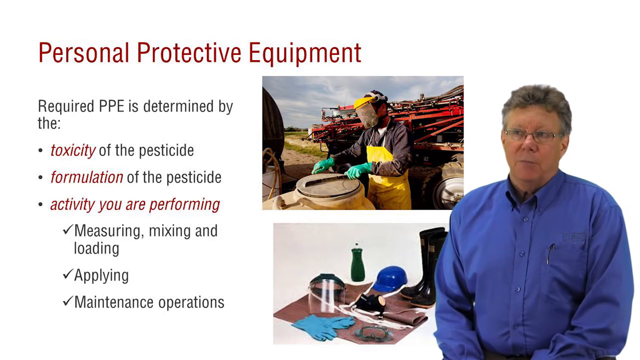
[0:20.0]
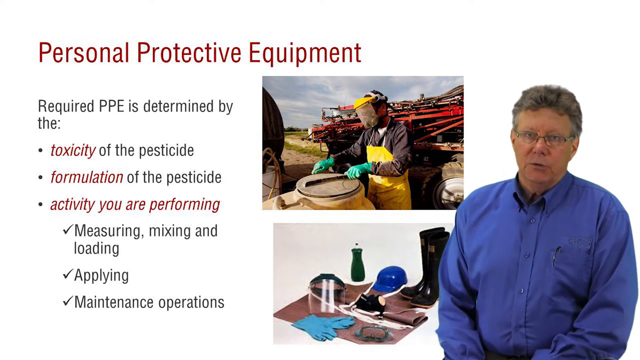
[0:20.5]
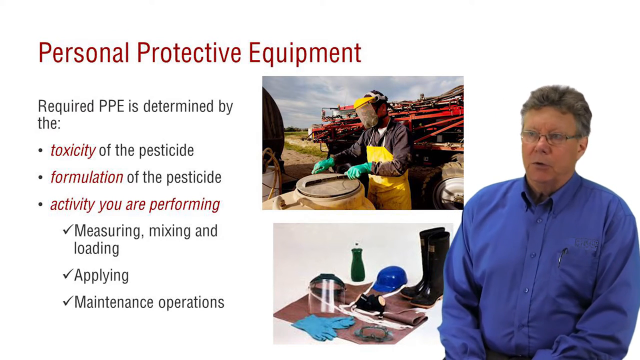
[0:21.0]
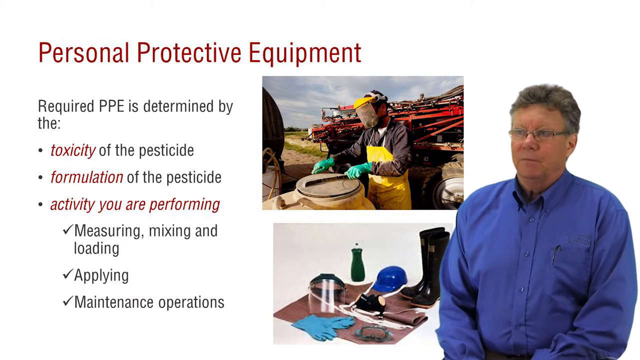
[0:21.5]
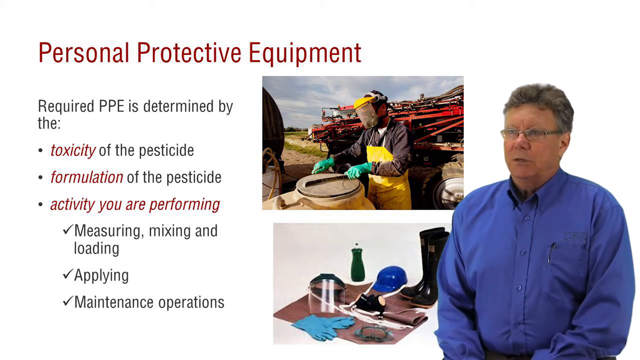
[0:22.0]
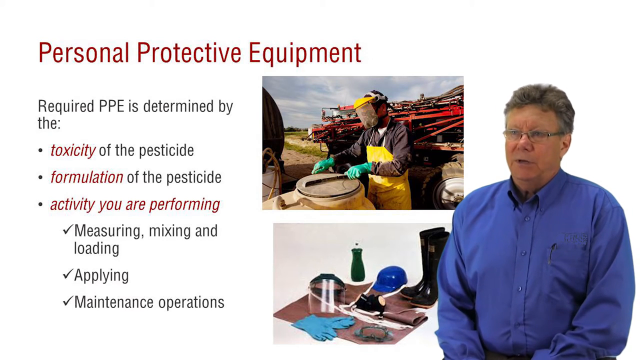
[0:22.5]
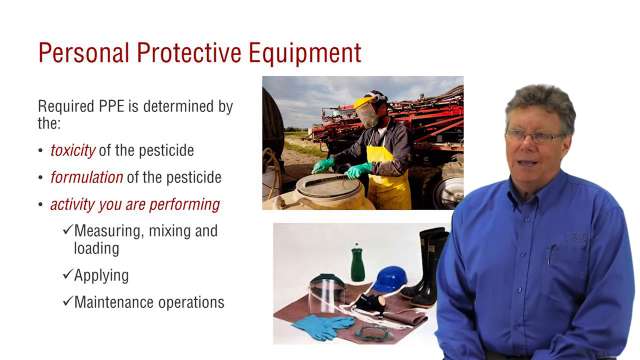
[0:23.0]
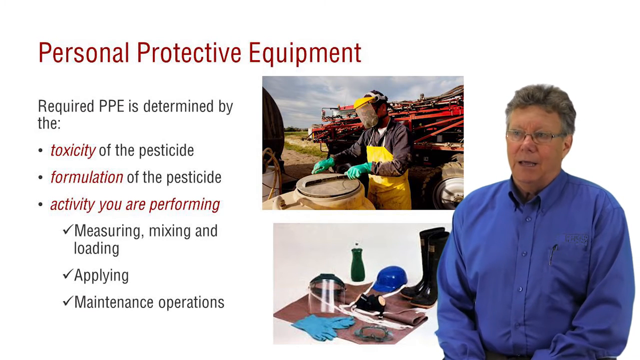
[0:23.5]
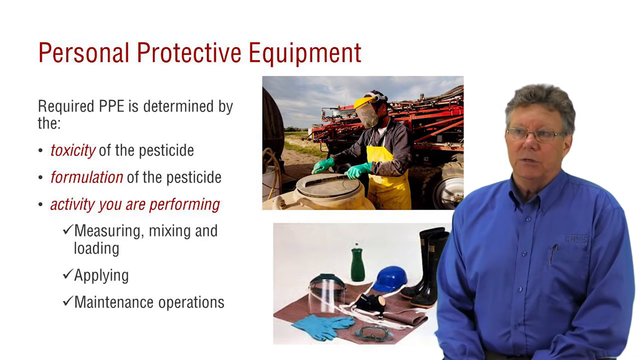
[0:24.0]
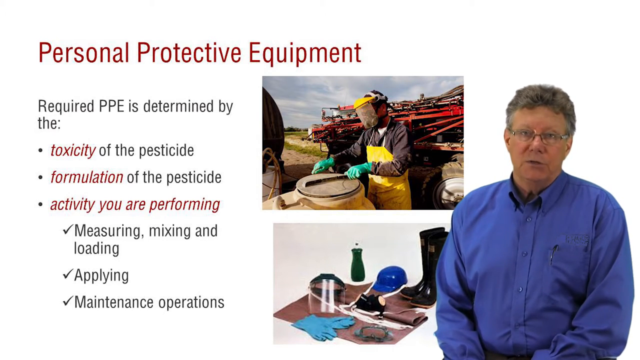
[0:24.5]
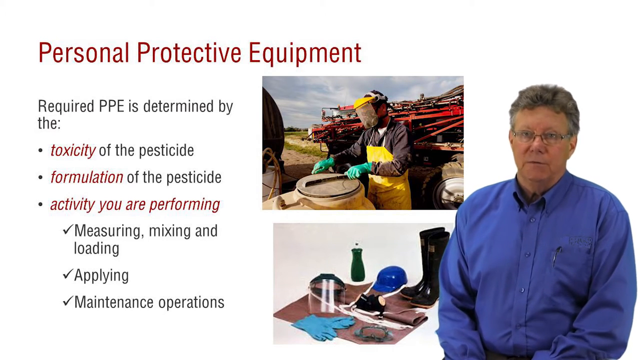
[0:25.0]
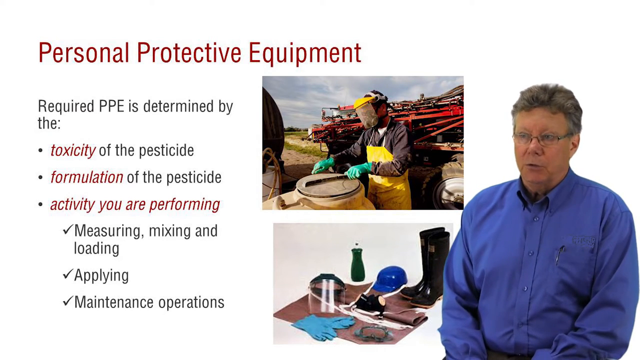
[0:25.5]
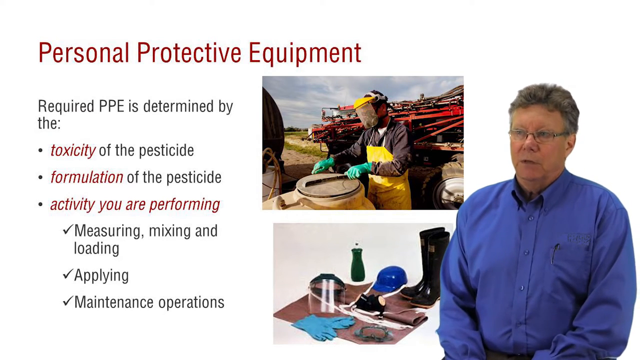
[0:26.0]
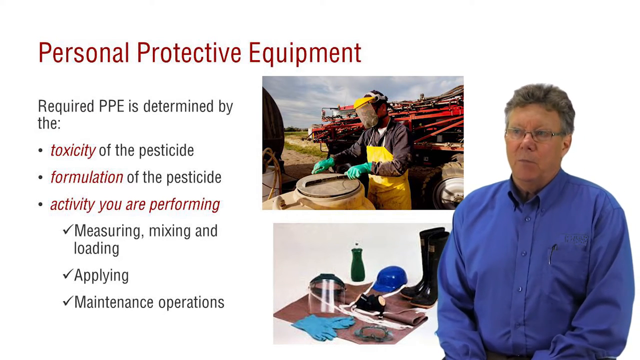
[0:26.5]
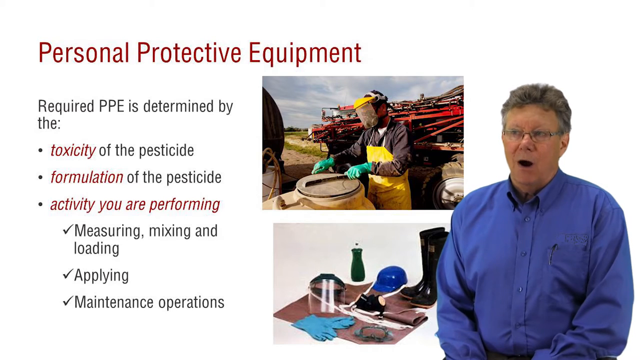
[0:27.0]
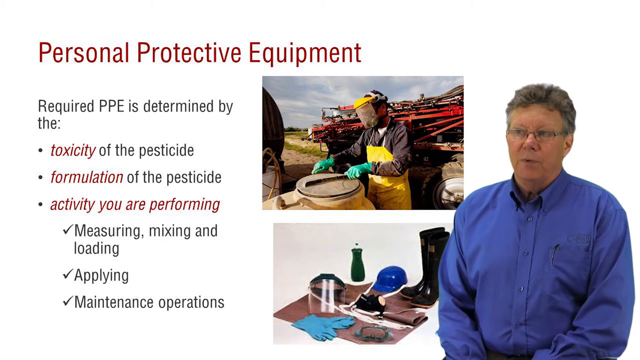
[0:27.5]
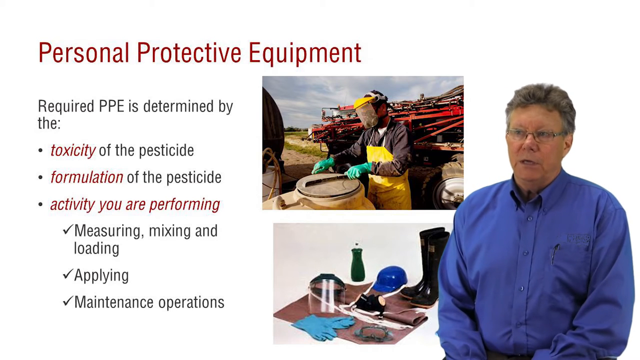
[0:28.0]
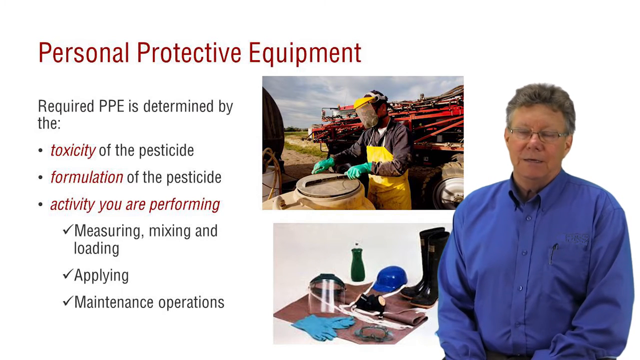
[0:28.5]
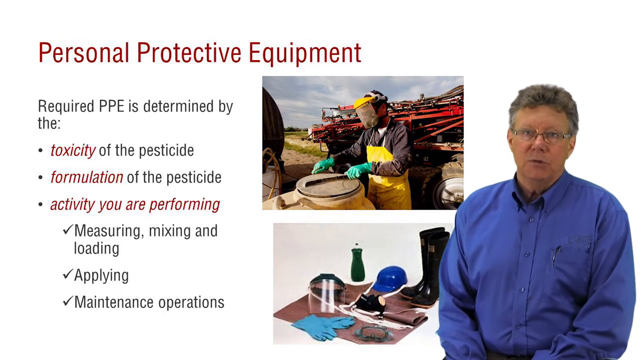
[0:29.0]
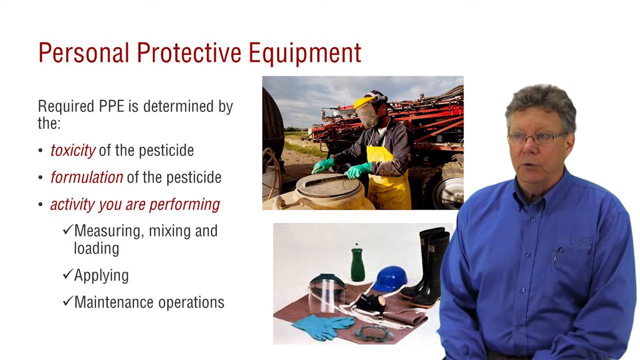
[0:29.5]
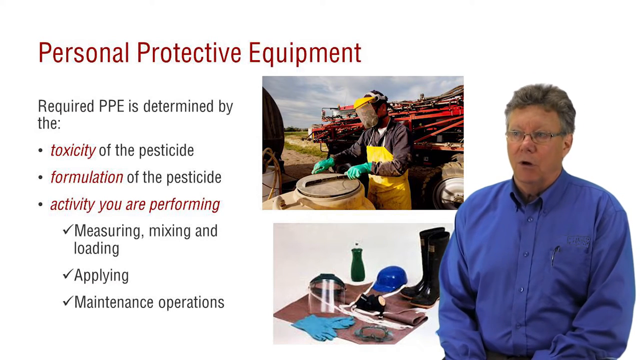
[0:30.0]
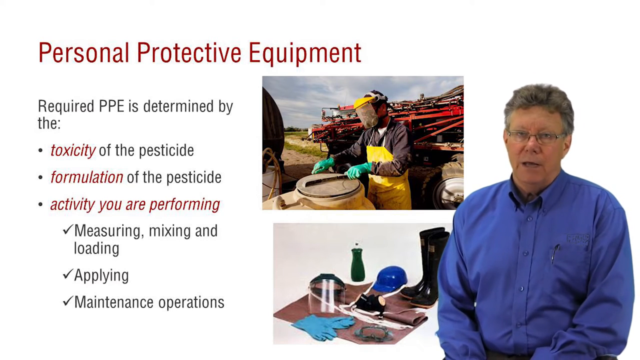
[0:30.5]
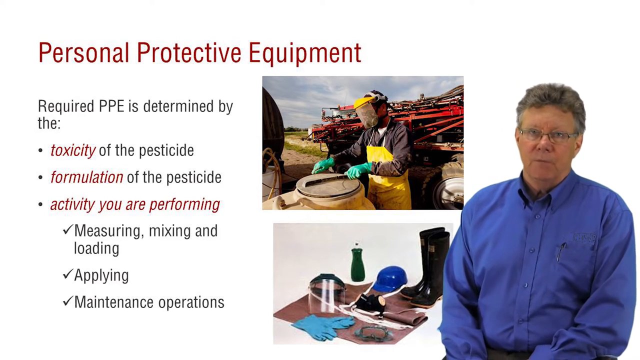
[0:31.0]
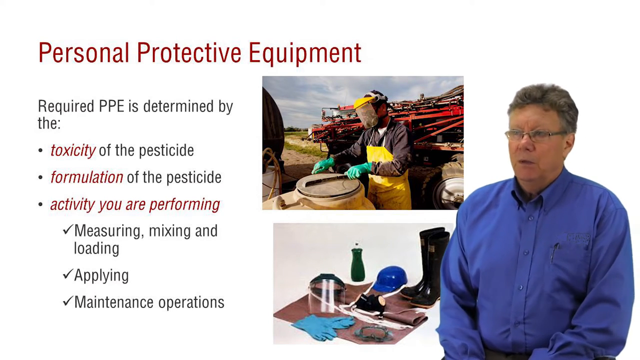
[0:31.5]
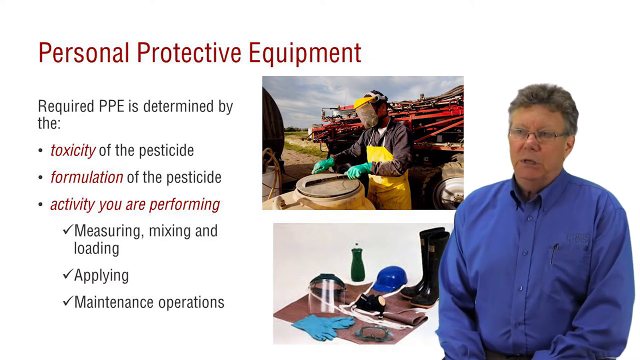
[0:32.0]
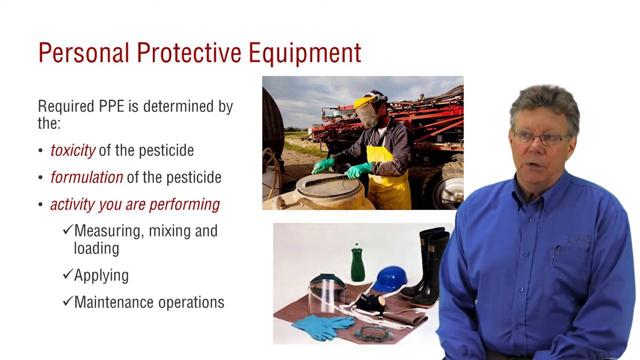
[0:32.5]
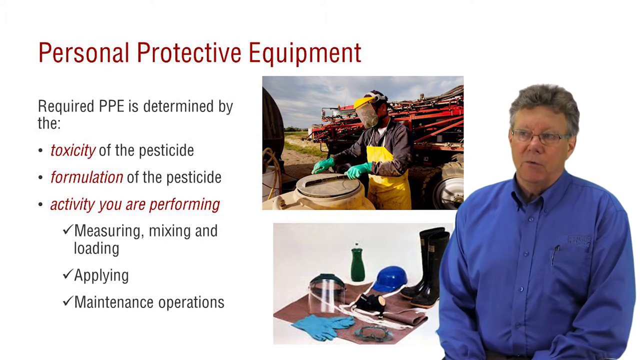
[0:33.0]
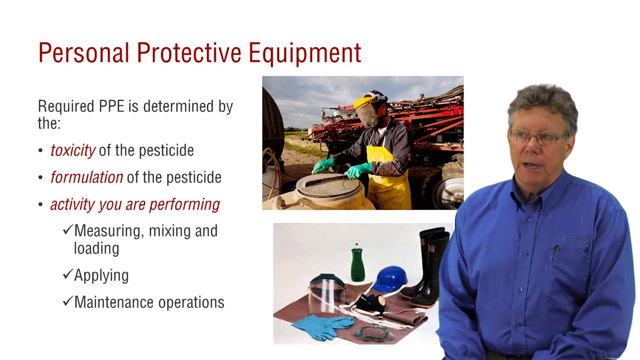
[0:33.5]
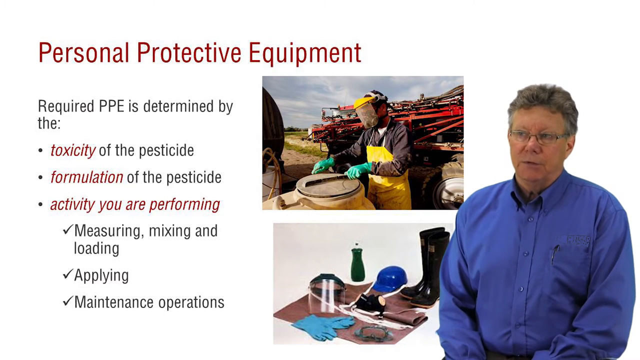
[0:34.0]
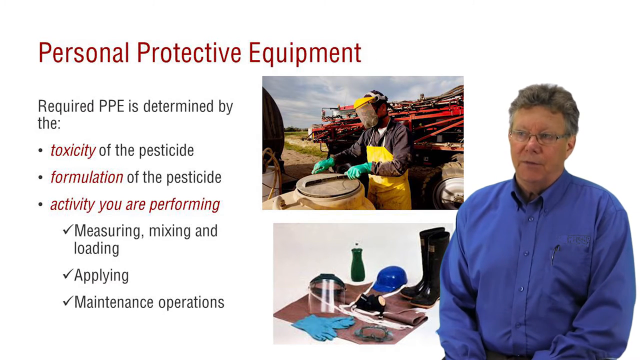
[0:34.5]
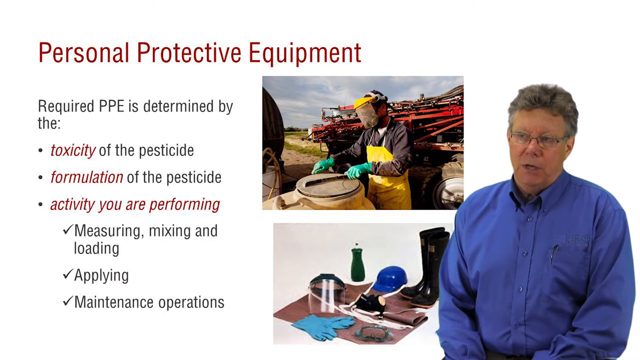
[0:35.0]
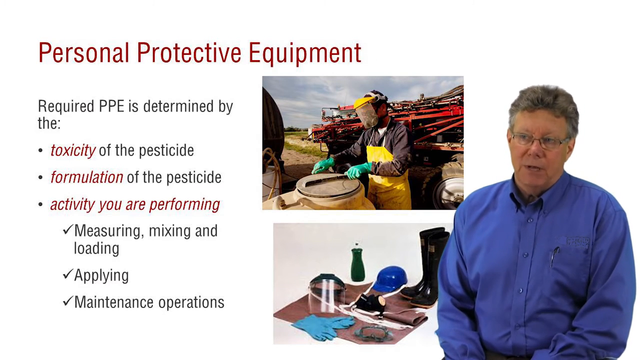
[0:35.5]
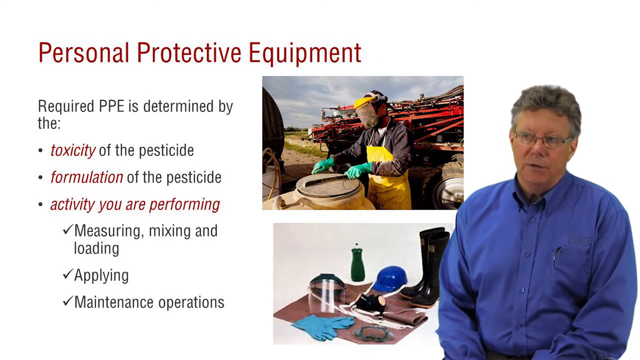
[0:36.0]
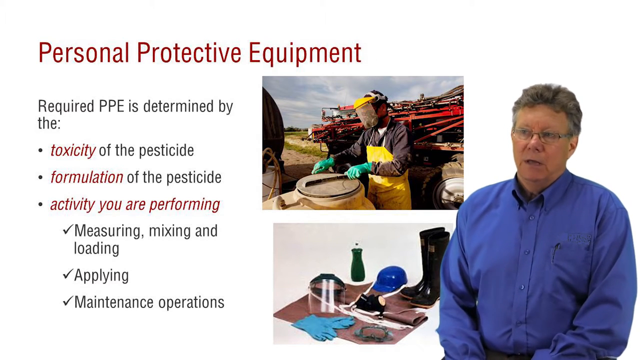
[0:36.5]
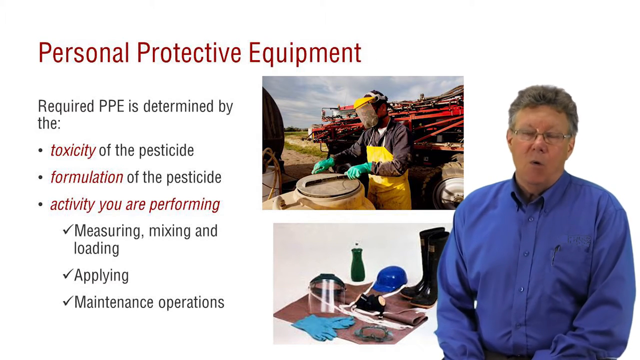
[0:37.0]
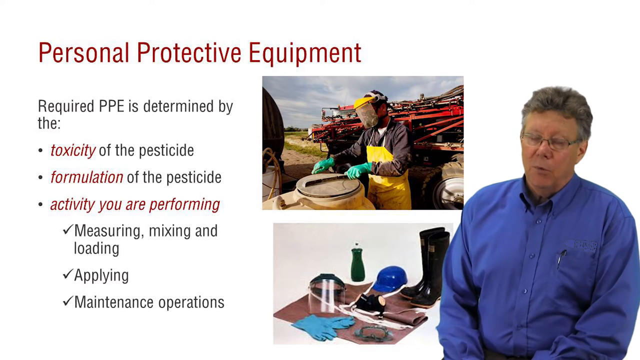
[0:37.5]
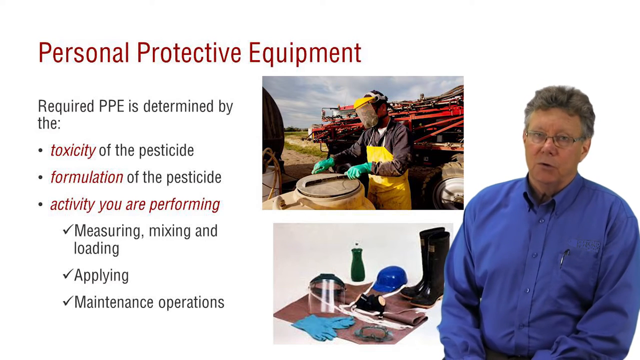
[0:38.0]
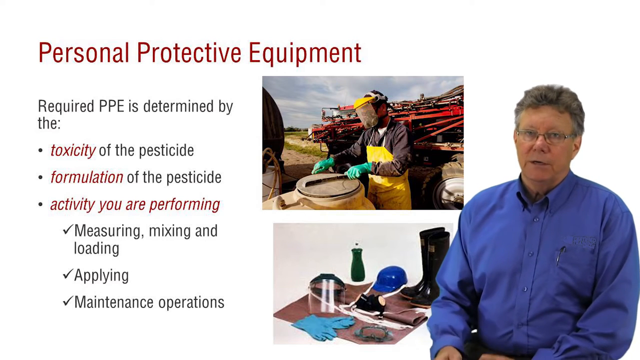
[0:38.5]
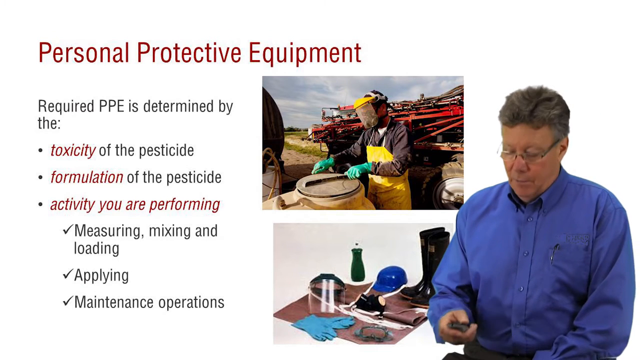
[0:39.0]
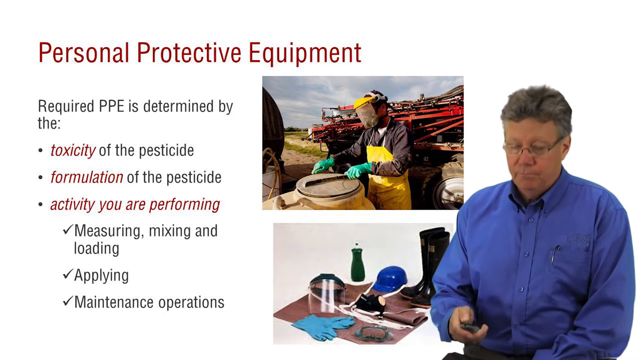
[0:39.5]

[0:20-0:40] A man in a blue long-sleeve button-down shirt is shown. He has a pen in his pocket, wears glasses, and has brown and gray hair. Text in red reads "personal protective equipment," and below in black: "required PPE is determined by the toxicity of the pesticide, formulation of the pesticide, activity you're performing. Examples are measuring, mixing, and loading, applying, and maintenance operations." A picture shows a man outside on a farm in daytime, with farm equipment behind him and the sky visible. He wears a long yellow apron, a yellow protective face helmet with a clear front strapped to his head, long sleeves, and long green rubber gloves that go up his arms. Along the bottom, different types of protective equipment are shown: long rubber boots, the mask with the clear front, blue rubber gloves, black and white sneakers, and protective overalls. The man in the shirt nods his head as he speaks.